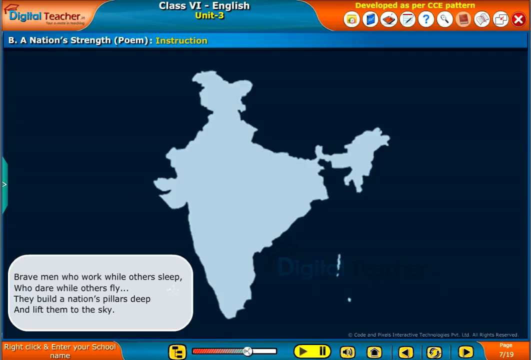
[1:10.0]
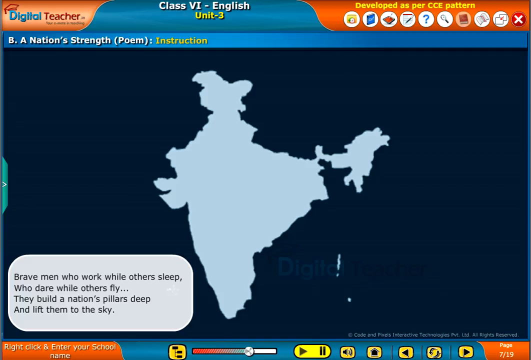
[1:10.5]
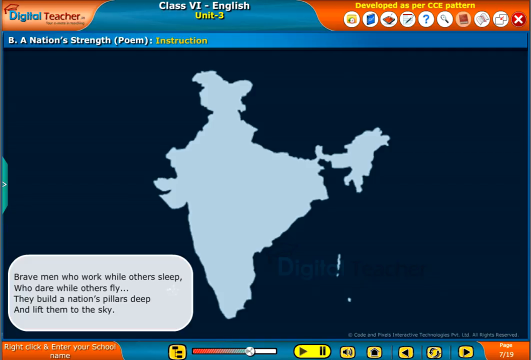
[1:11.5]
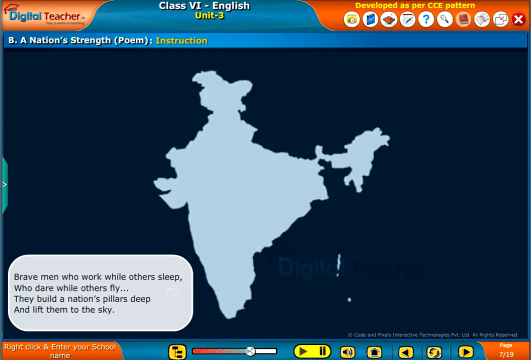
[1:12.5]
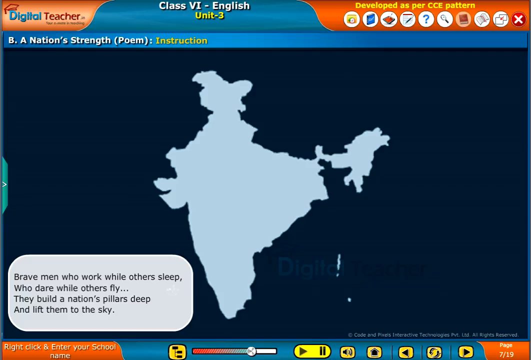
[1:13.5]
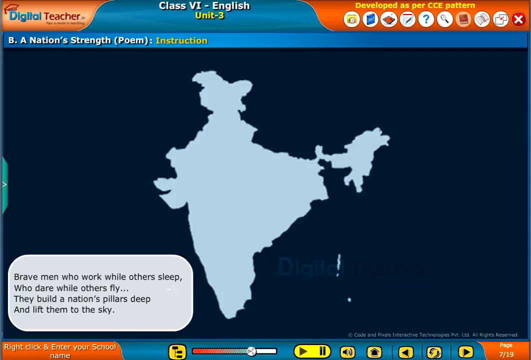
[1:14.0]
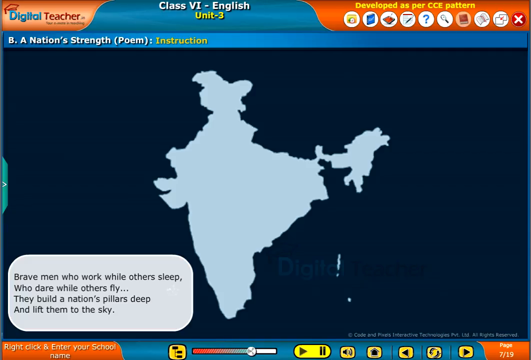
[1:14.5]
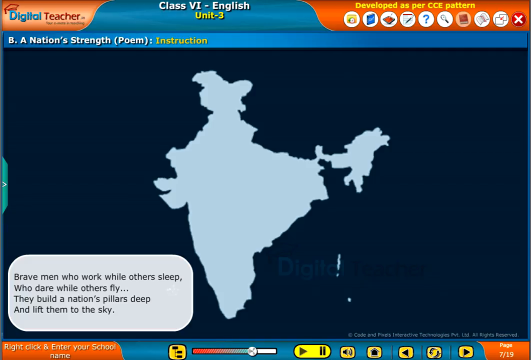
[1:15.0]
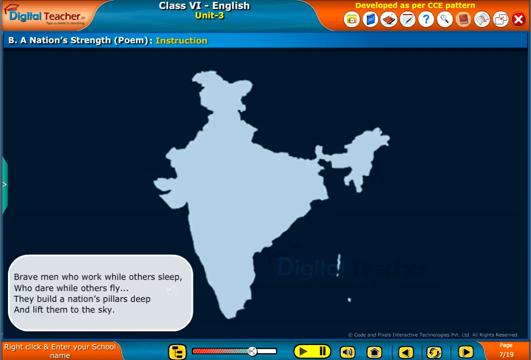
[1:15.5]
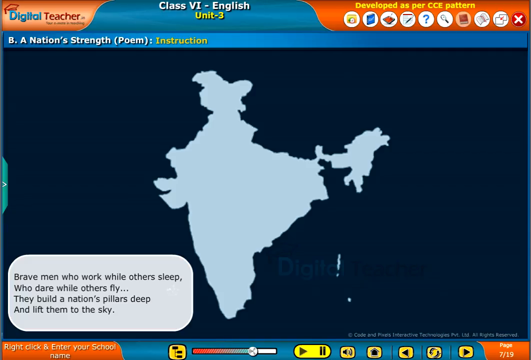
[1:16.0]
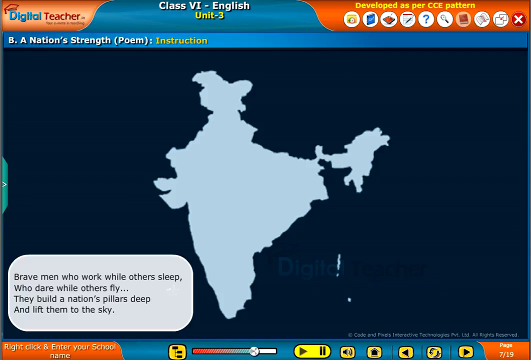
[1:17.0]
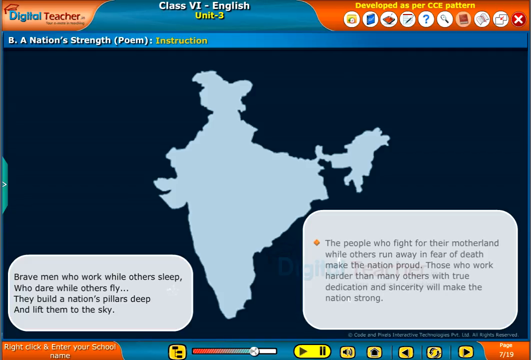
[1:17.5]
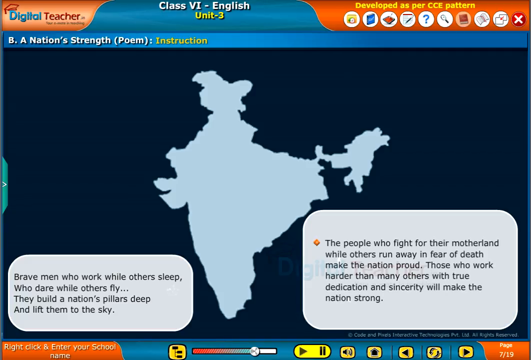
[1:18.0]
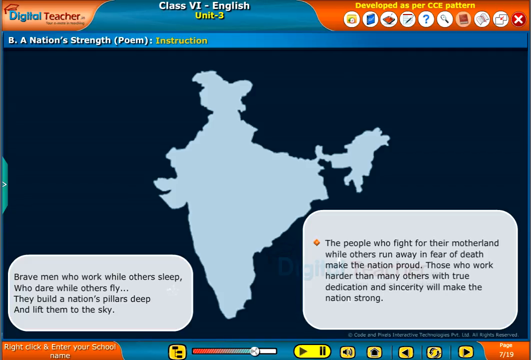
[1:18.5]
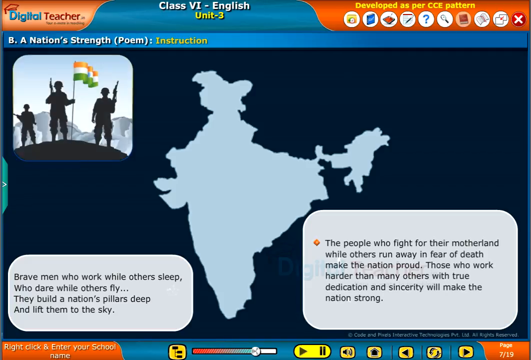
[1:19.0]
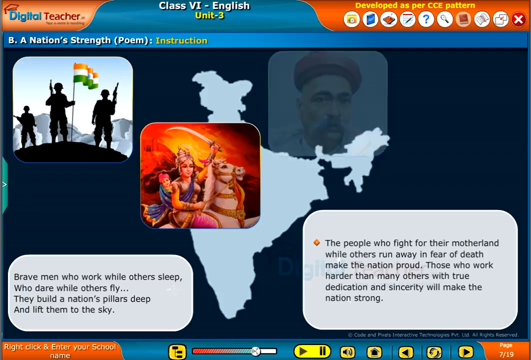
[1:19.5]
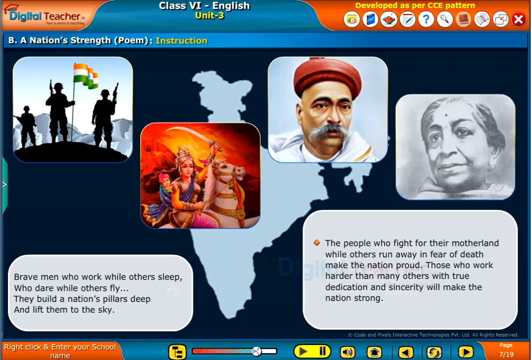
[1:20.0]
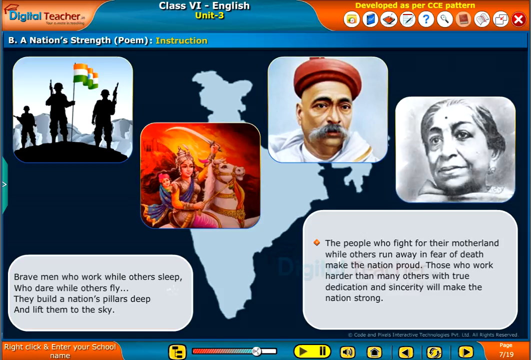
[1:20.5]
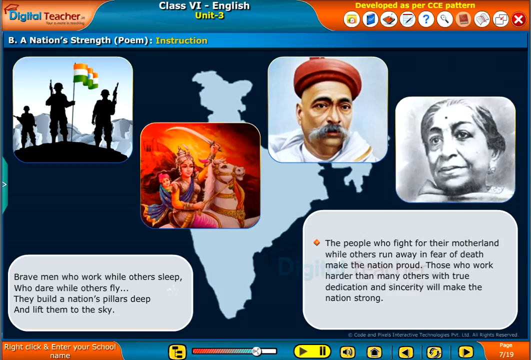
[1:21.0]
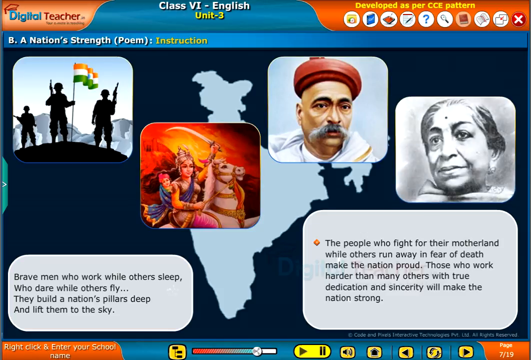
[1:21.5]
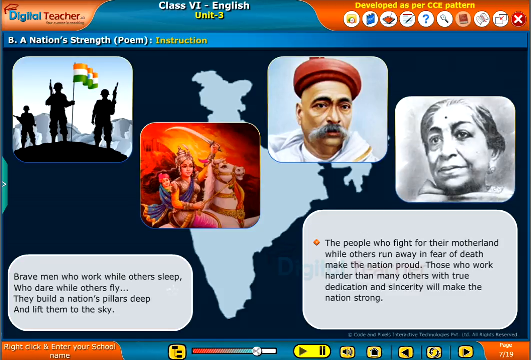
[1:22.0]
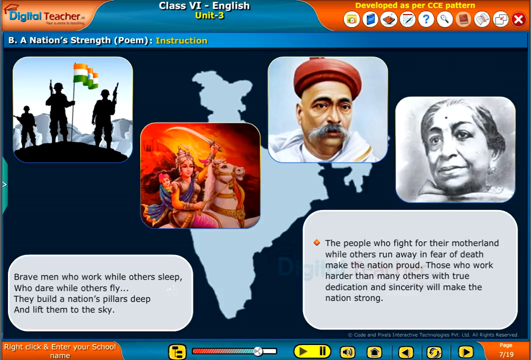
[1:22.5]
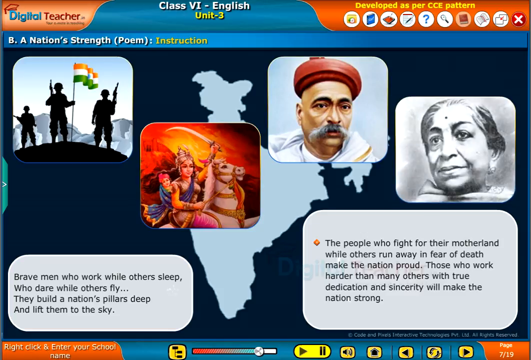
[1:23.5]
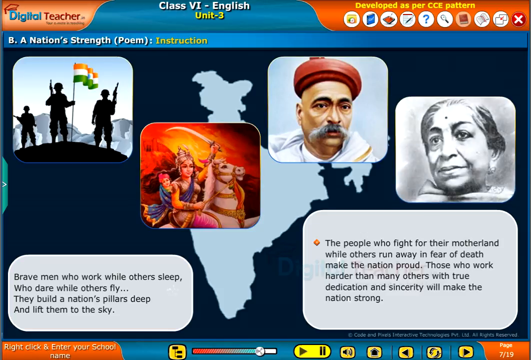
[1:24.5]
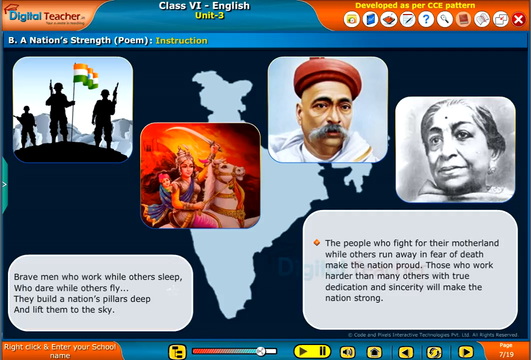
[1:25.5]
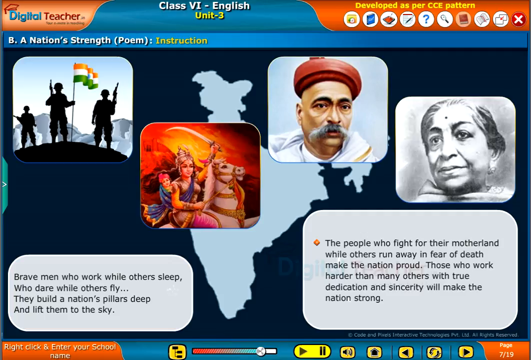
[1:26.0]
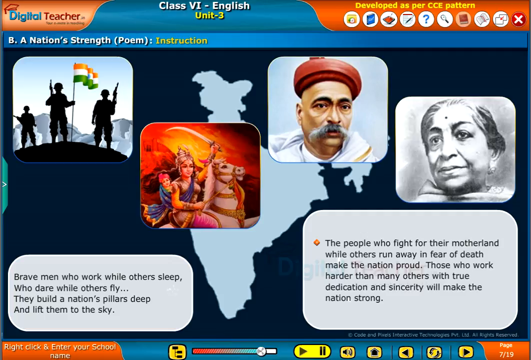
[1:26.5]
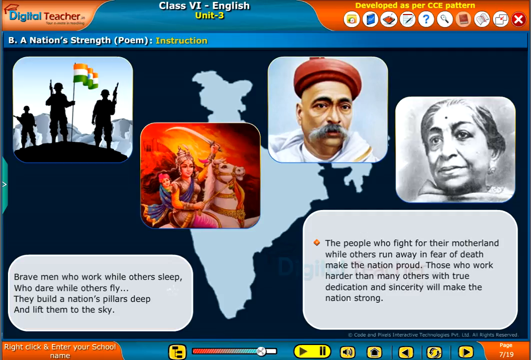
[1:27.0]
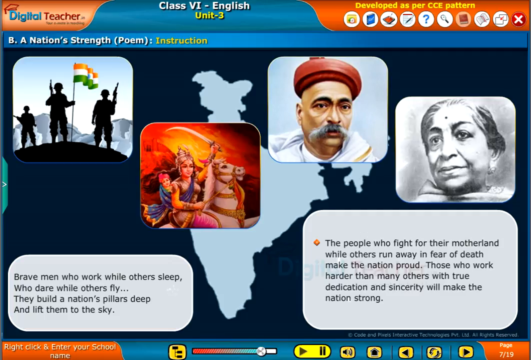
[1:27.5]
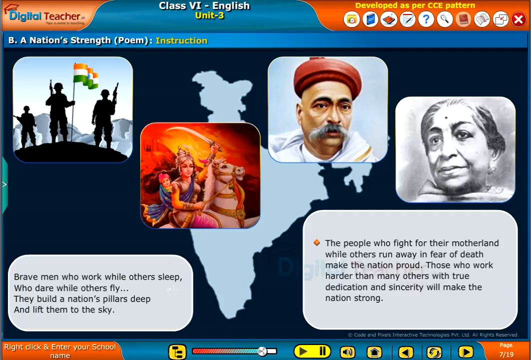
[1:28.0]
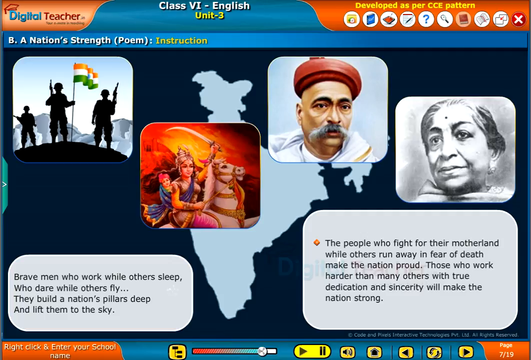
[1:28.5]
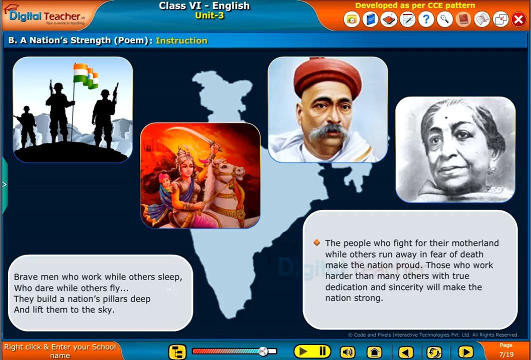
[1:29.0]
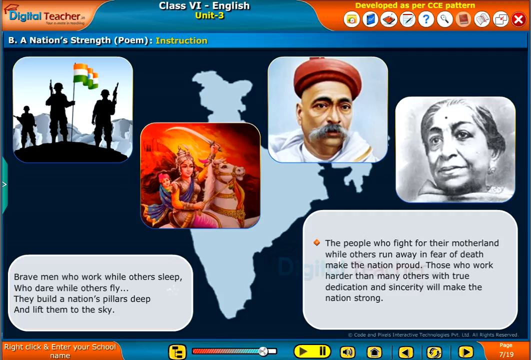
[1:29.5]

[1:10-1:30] At the top of the screen, in the middle of a horizontal frame in red and green that runs across the top, the title is written as "class 6 English unit 3". The screen is dark, and in the middle of the dark background is a pale blue map of India, an outline map filled with blue with no states labeled. In the lower left corner, text in black on a rectangular frame with rounded corners reads "brave men who walk while others sleep, who dare while others fly. They build a nation's pillars deep and lift them up to the sky." Four images then pop up with animated effects from left to right across the screen. The first shows the silhouette of three soldiers with their guns lifted up, the one in the middle holding the Indian flag. The second shows a woman dressed in elaborate Indian attire with a sword in her hand, riding a white horse. The third shows a man with a red turban on his head and a gray mustache. The fourth shows a woman's face with a subtle smile; she looks like Indira Gandhi.